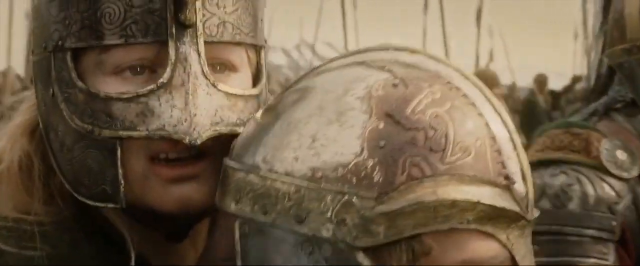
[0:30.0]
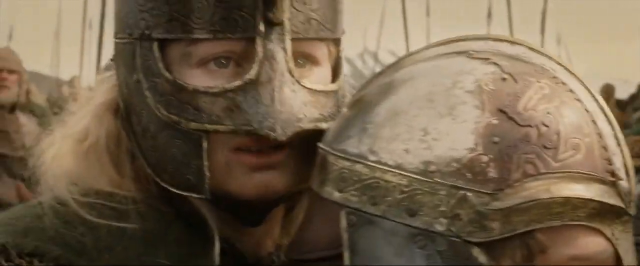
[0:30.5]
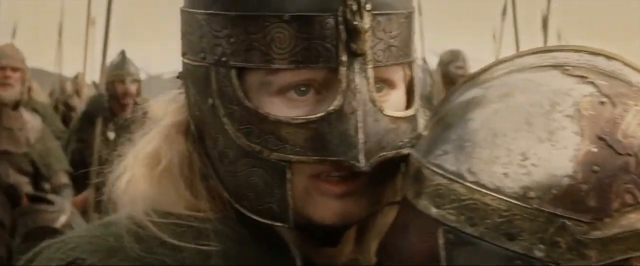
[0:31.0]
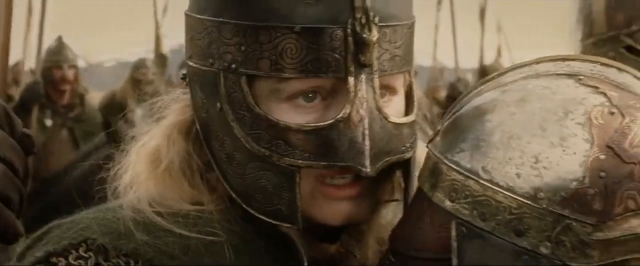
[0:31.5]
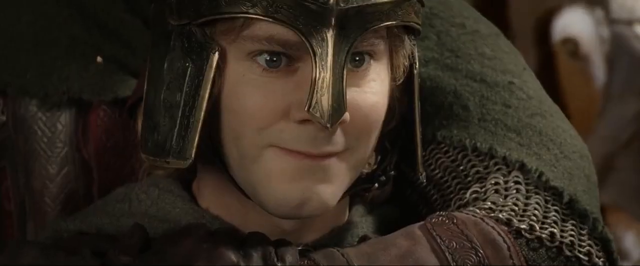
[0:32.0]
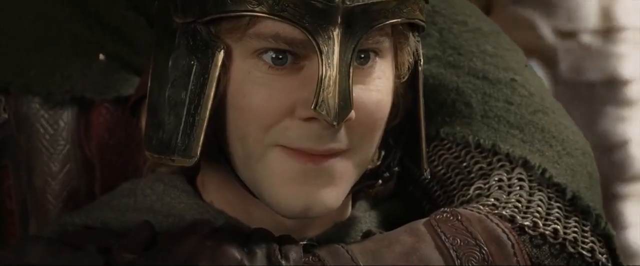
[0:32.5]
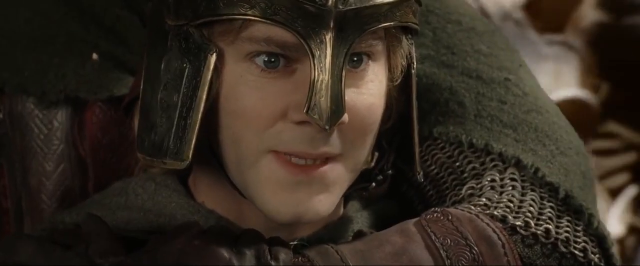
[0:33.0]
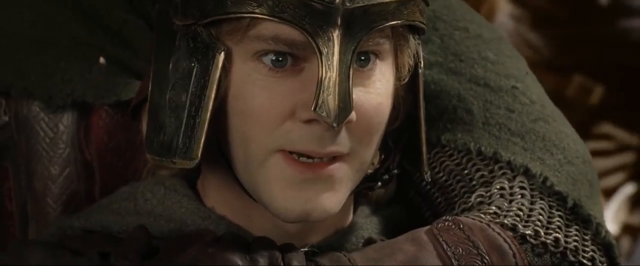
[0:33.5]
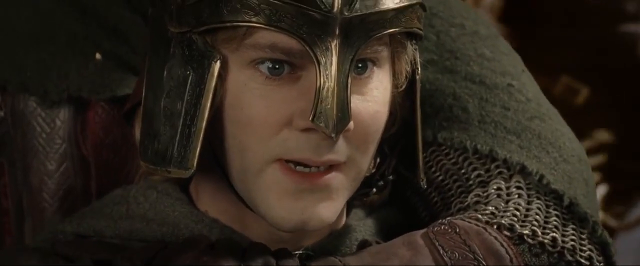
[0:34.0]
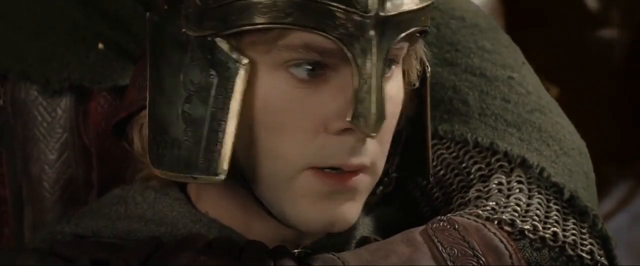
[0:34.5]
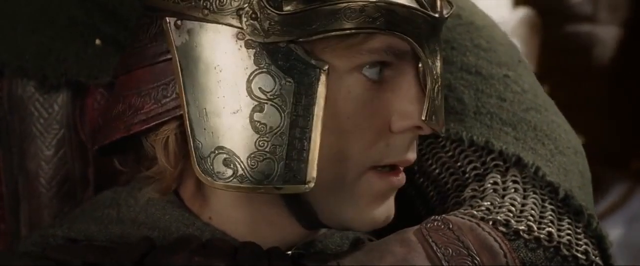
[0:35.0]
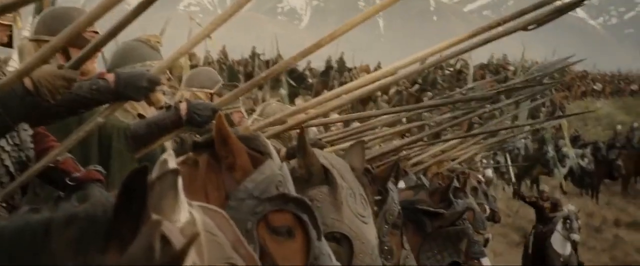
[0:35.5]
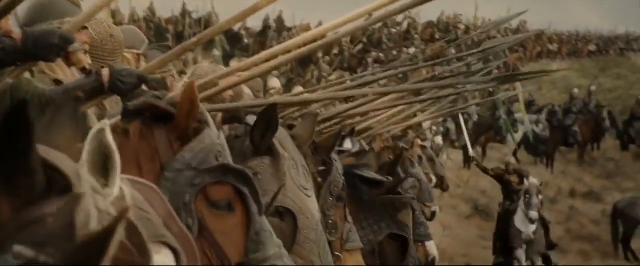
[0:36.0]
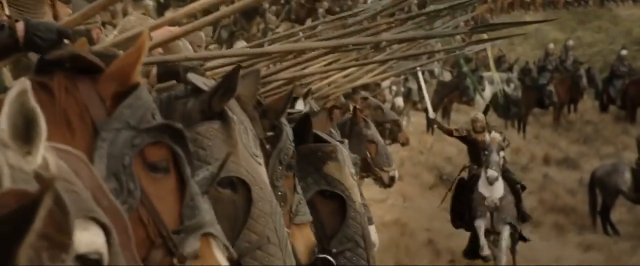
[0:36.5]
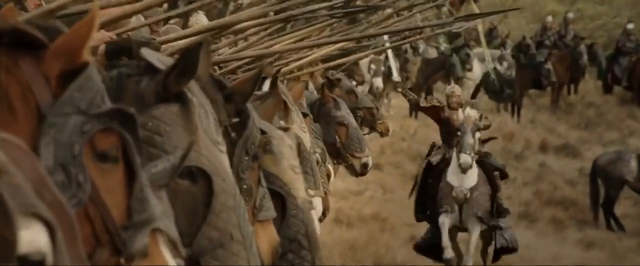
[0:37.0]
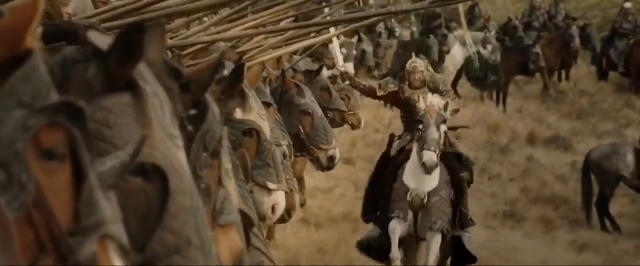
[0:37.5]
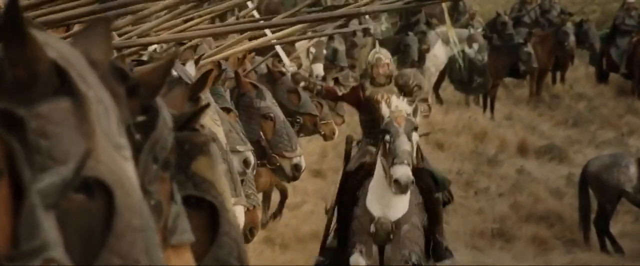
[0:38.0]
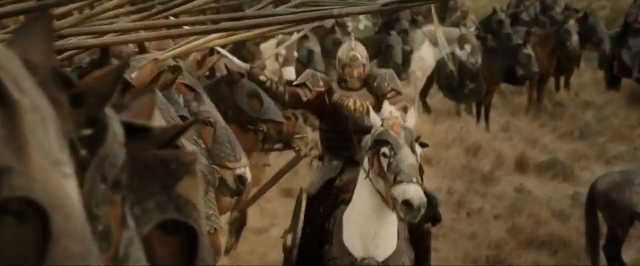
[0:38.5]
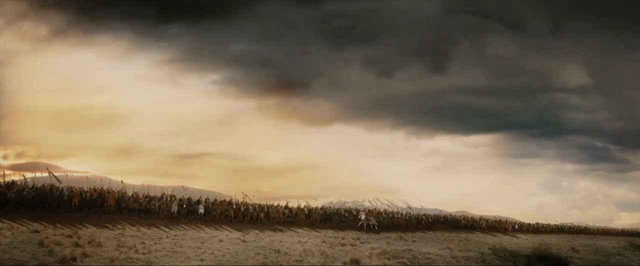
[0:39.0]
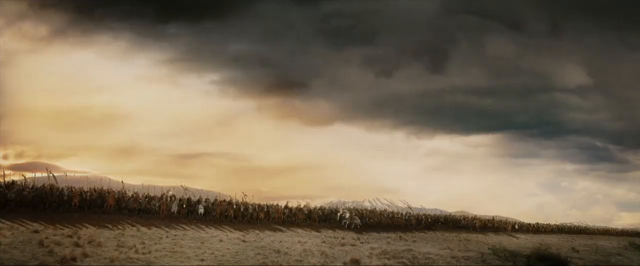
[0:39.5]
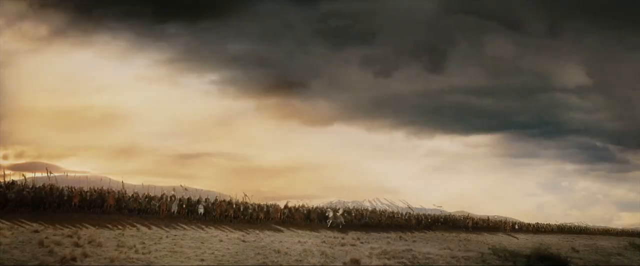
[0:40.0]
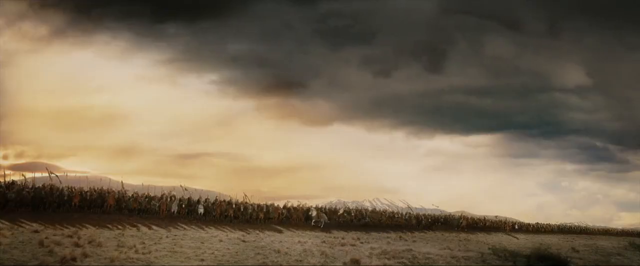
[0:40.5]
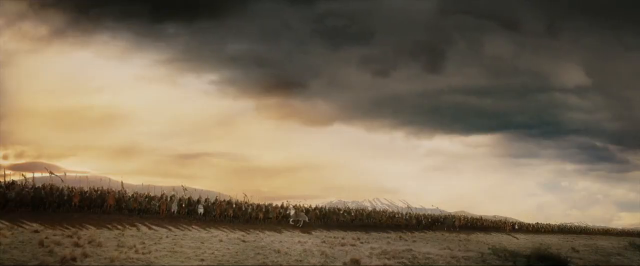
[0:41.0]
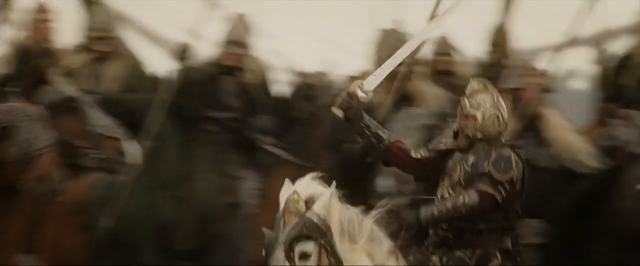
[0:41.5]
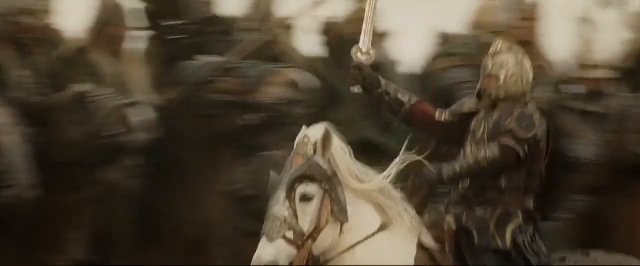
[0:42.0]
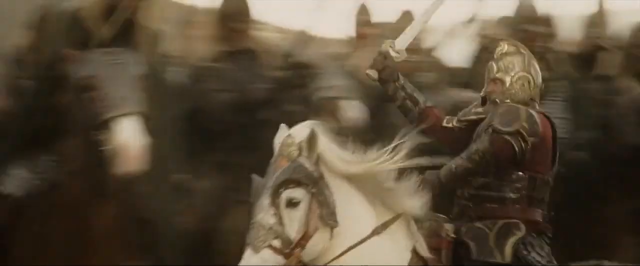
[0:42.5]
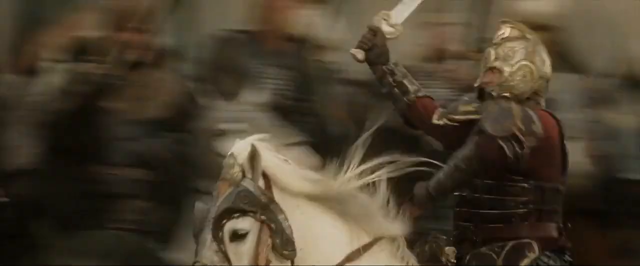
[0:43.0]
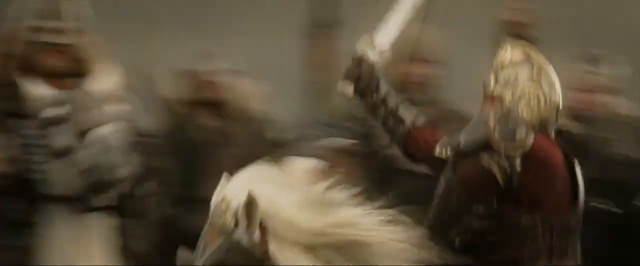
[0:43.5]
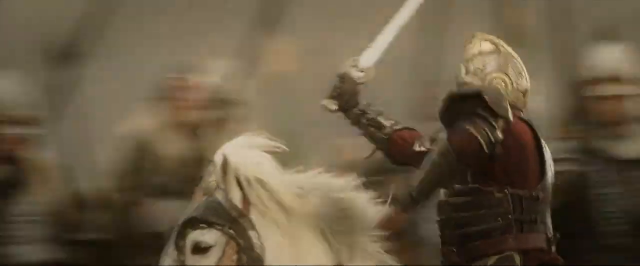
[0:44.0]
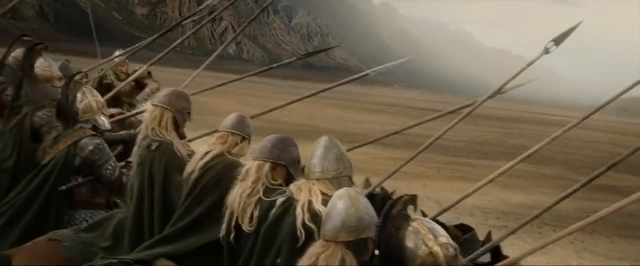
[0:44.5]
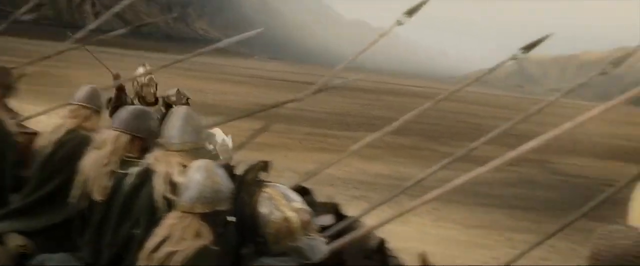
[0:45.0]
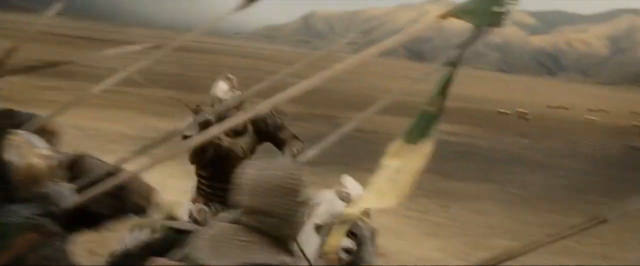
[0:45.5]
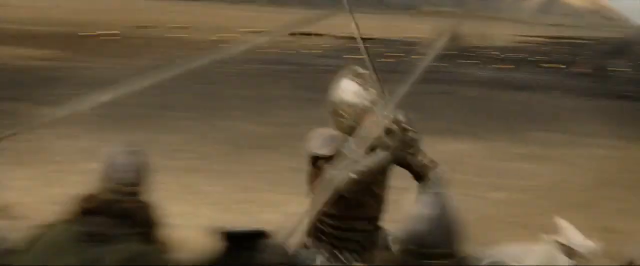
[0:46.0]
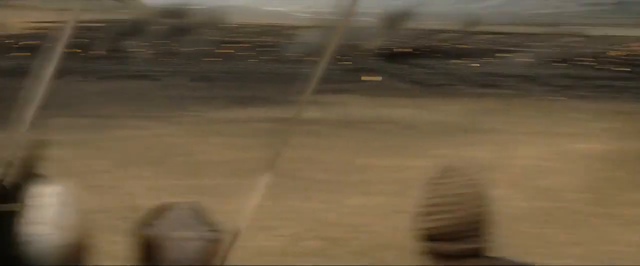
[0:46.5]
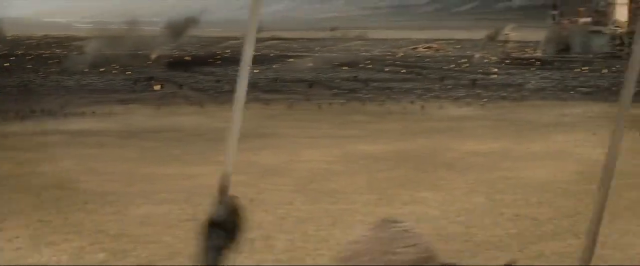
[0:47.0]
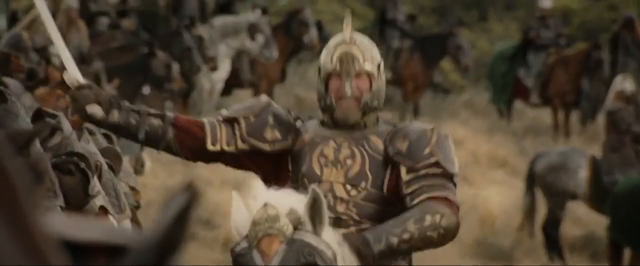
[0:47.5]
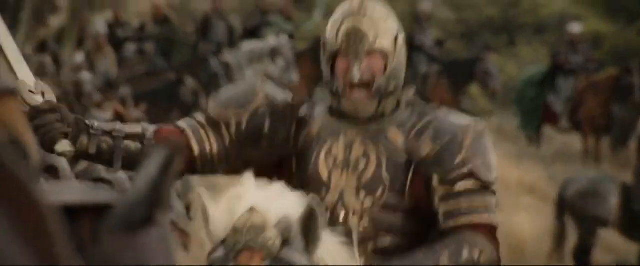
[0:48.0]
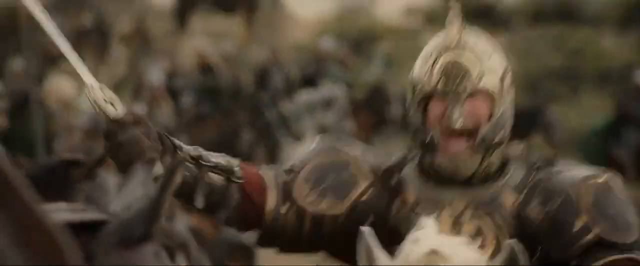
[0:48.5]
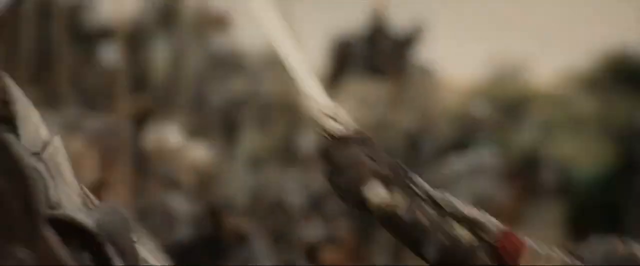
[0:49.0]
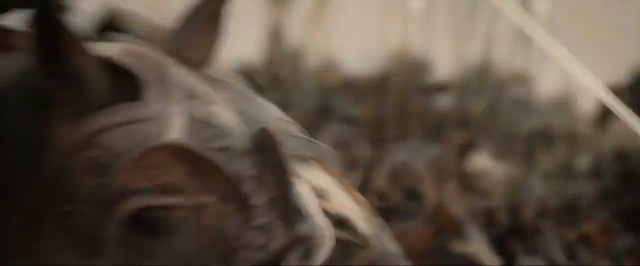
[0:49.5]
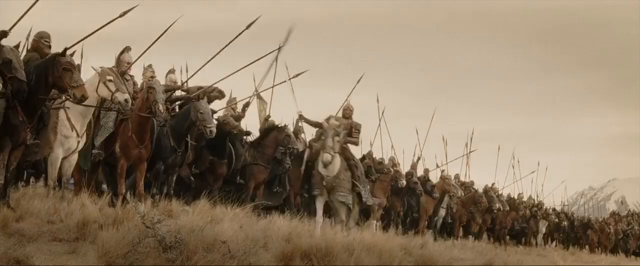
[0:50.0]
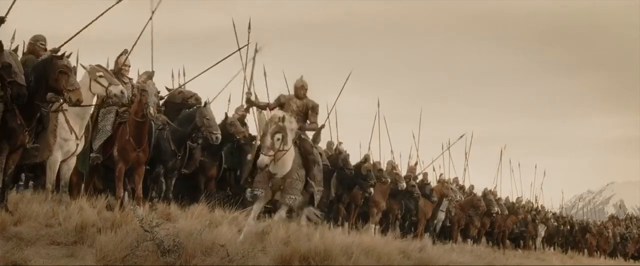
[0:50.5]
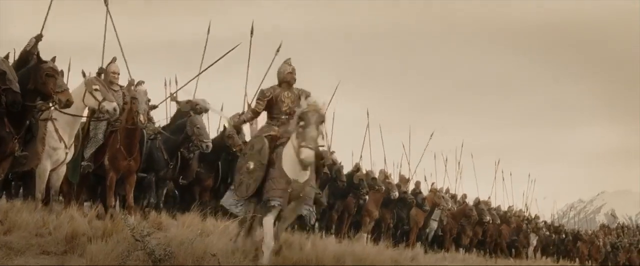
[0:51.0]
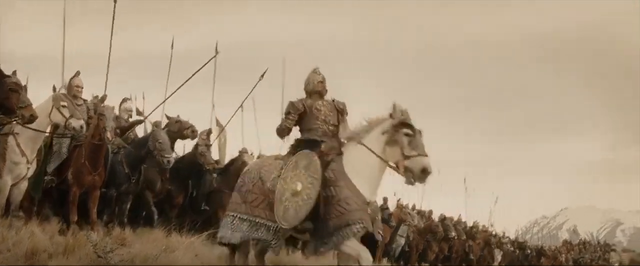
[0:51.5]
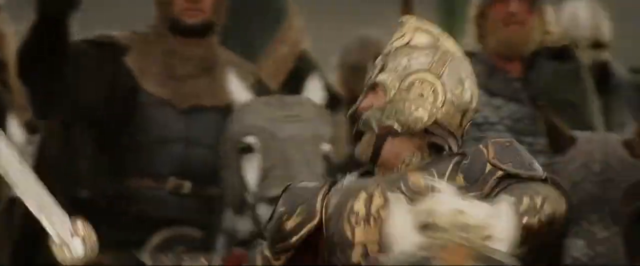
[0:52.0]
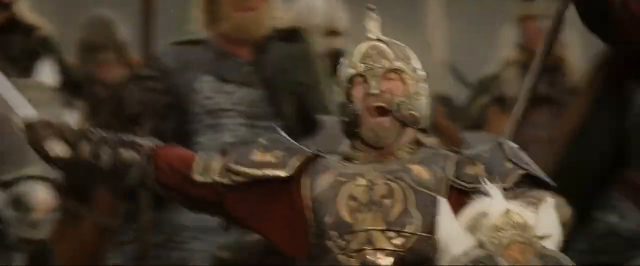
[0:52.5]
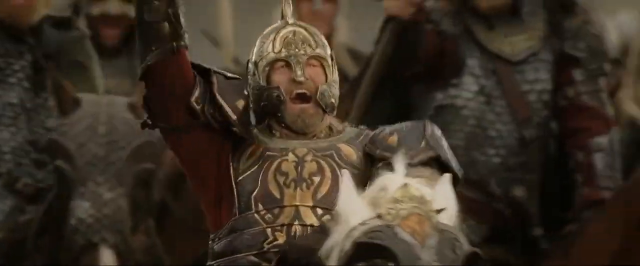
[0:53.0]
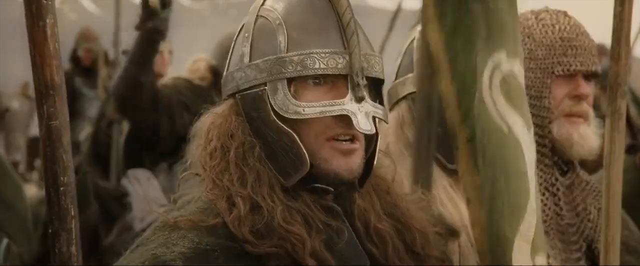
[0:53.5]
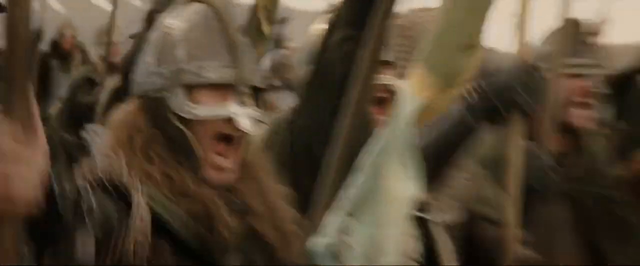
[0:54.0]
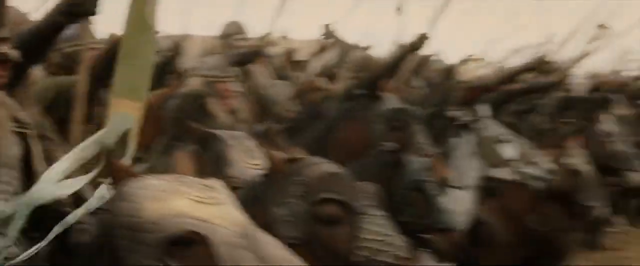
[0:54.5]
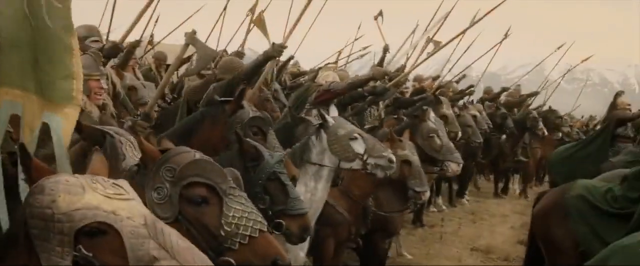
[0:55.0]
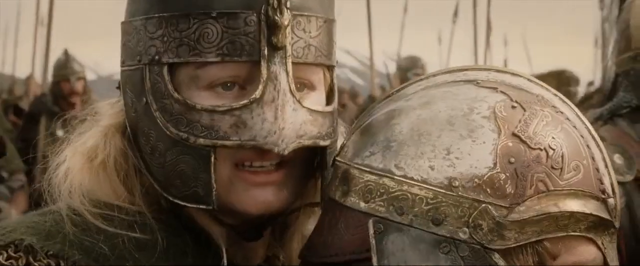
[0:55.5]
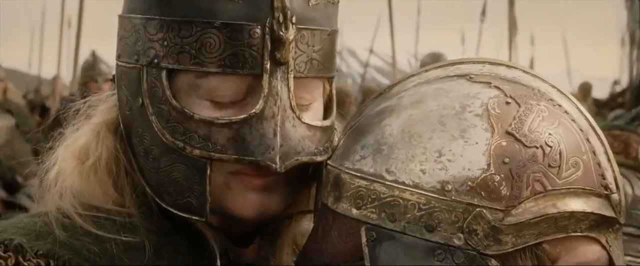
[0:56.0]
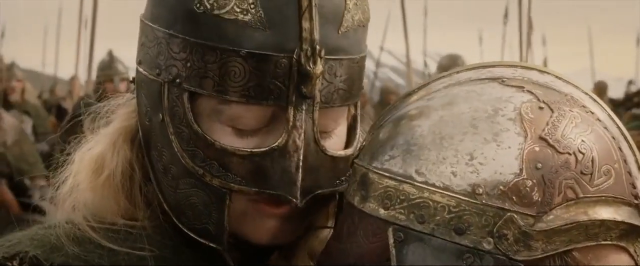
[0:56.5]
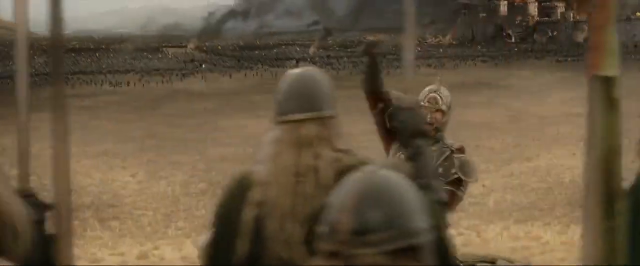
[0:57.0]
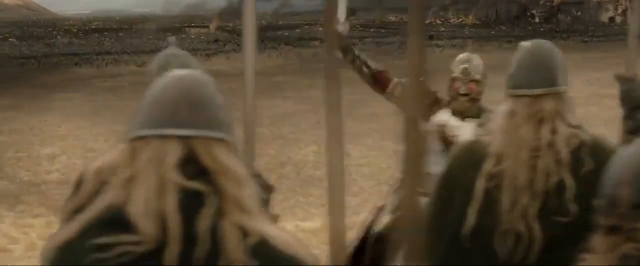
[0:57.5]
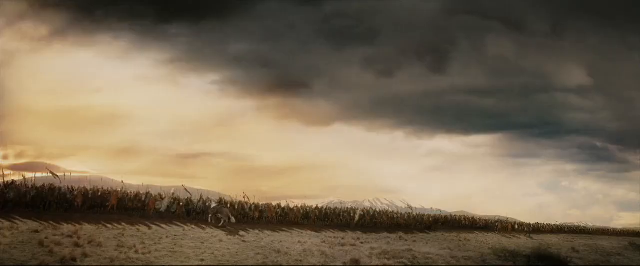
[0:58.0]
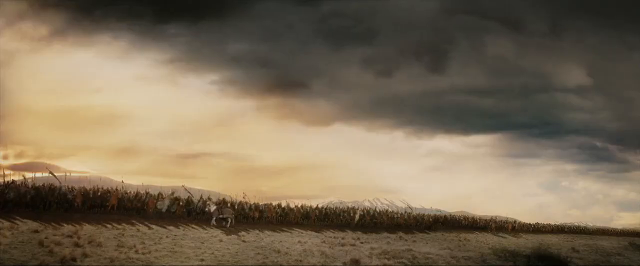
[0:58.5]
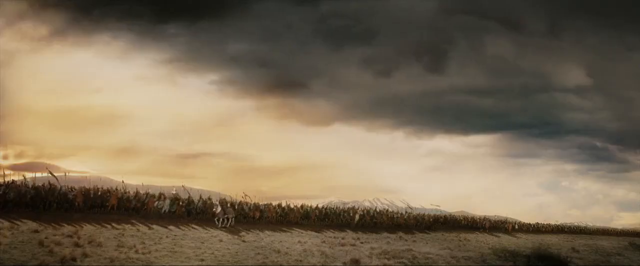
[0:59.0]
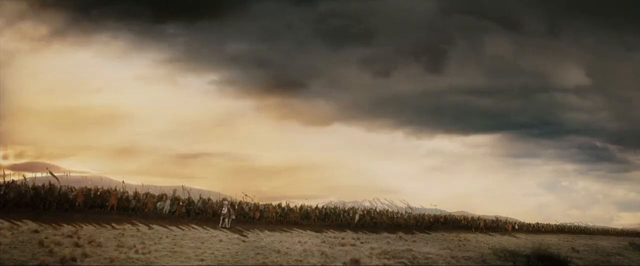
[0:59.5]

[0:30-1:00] The footage appears to be from a Lord of the Rings film. It opens on a woman disguised as a man in the army, with a smaller, also armored person in front of her on her horse; she appears worried and is talking to this person. A closer shot shows this person giving a slight smirk that turns into a worried look as they turn to look to their left. A long shot of the army follows: men on horses brandish their spears, and a man on a white horse rides toward the camera holding his sword aloft, charging. It cuts to a very distant shot of an army under a slightly dark and cloudy sky. Back on the man on the white horse, a much closer shot shows him riding from right to left as the camera pans with him. It cuts to a view from behind the men in the army, focused on the man on the white horse riding from left to right this time, with the camera moving with him. Then a front view shows him charging toward the camera, shouting, preparing for battle, and he stops. It cuts to him facing forward, leaning back, shouting at his army and raising his sword. It cuts very briefly back to the woman, who looks more worried. The men on horses are shouting.